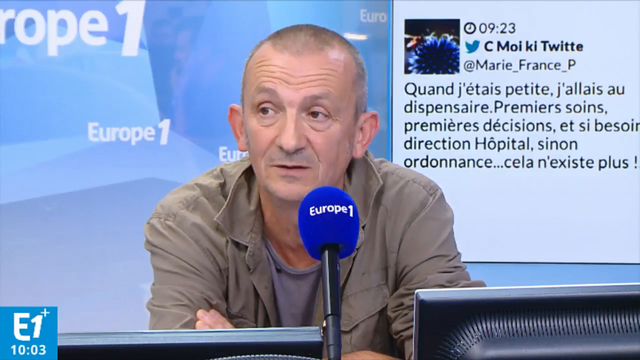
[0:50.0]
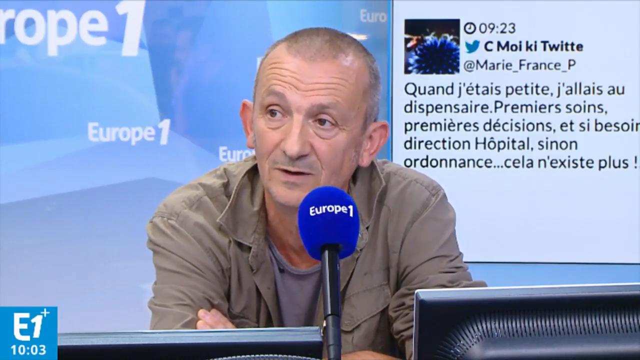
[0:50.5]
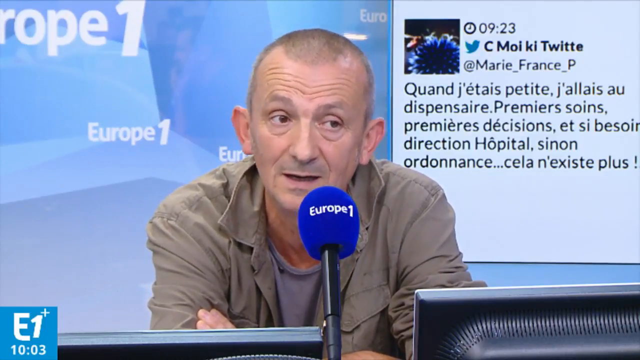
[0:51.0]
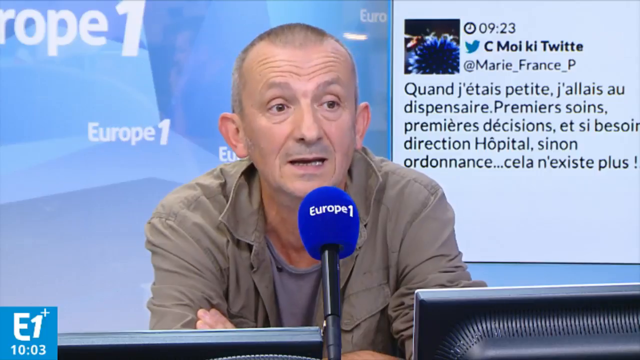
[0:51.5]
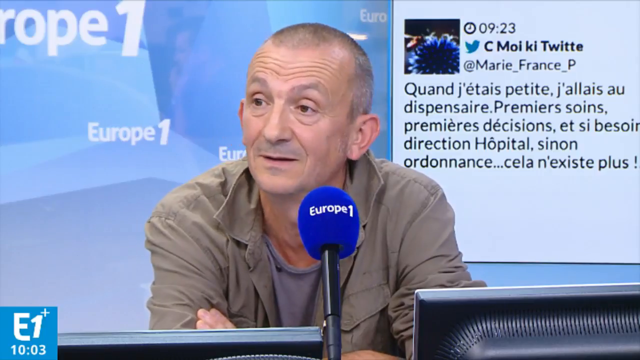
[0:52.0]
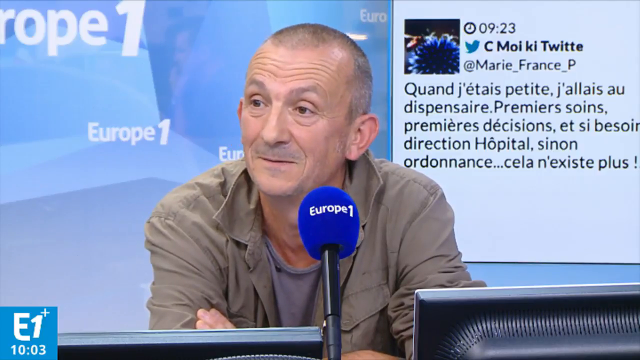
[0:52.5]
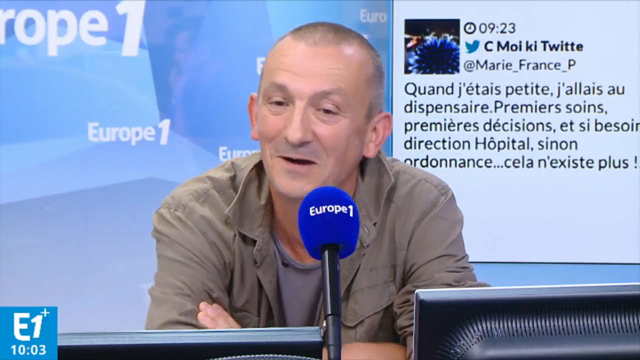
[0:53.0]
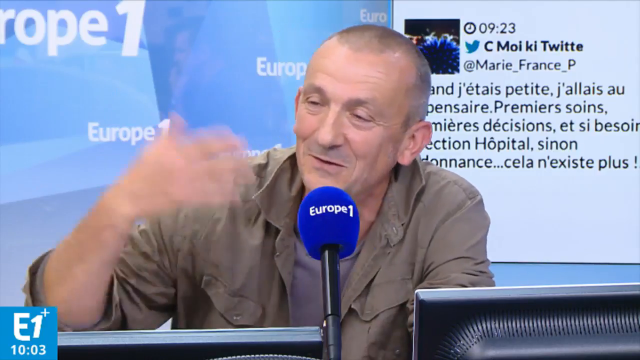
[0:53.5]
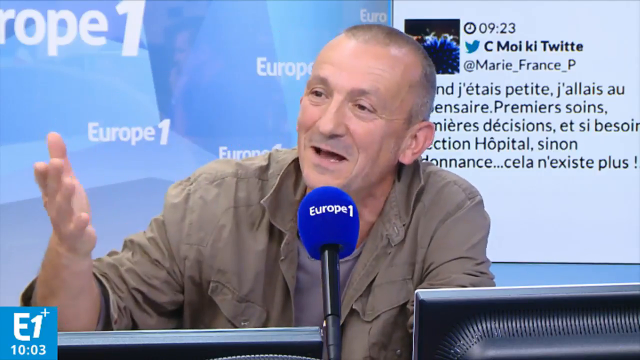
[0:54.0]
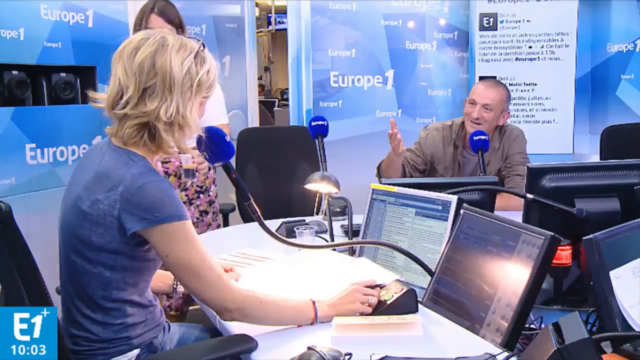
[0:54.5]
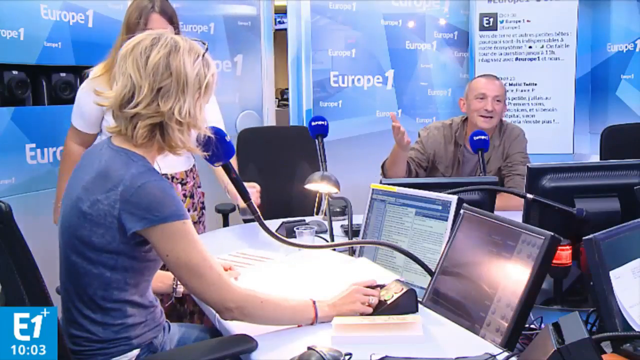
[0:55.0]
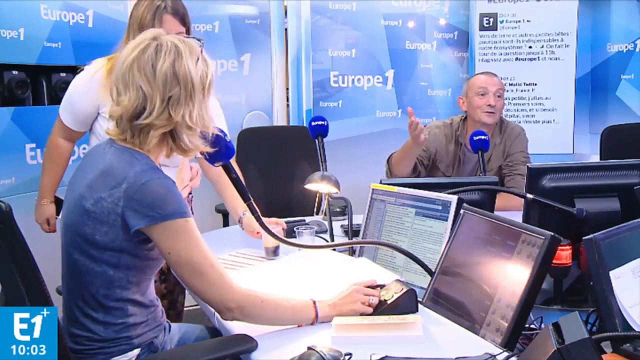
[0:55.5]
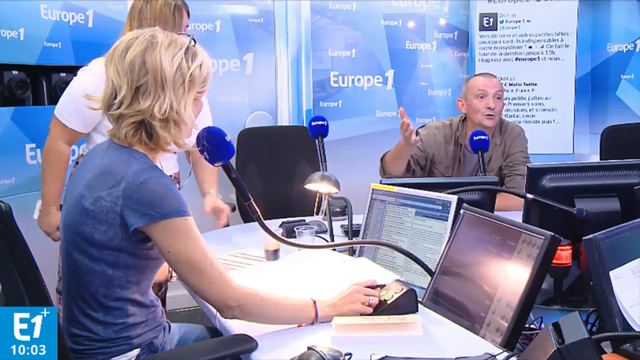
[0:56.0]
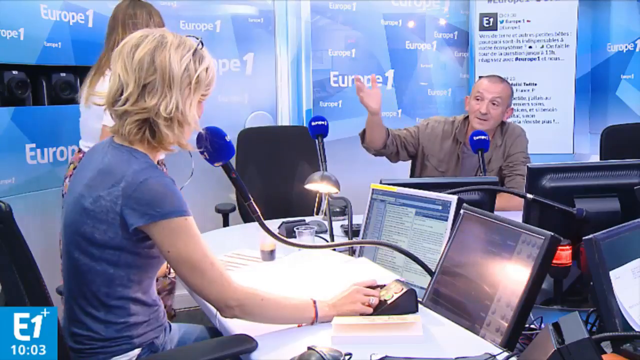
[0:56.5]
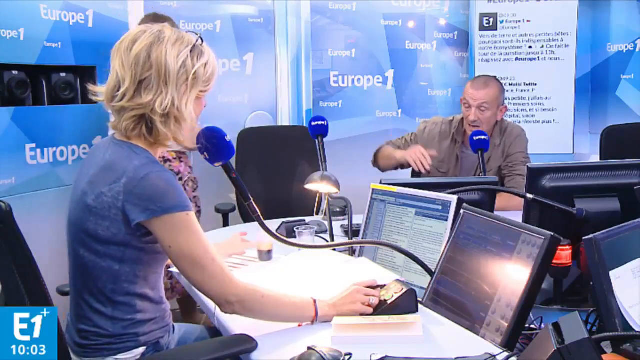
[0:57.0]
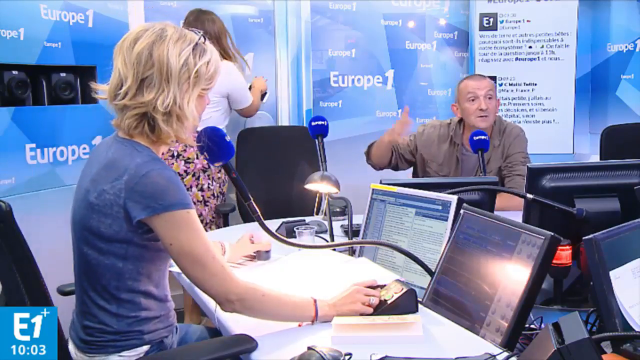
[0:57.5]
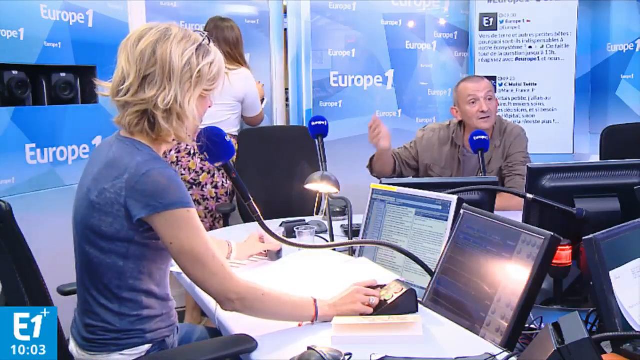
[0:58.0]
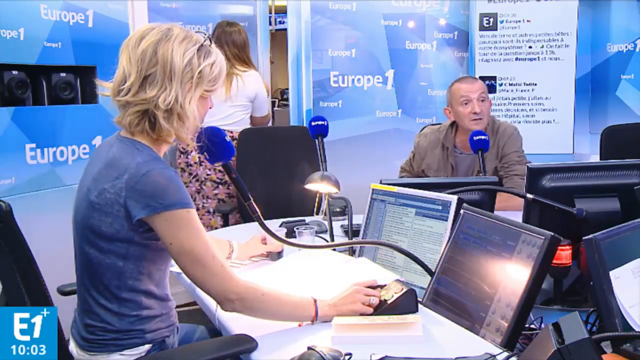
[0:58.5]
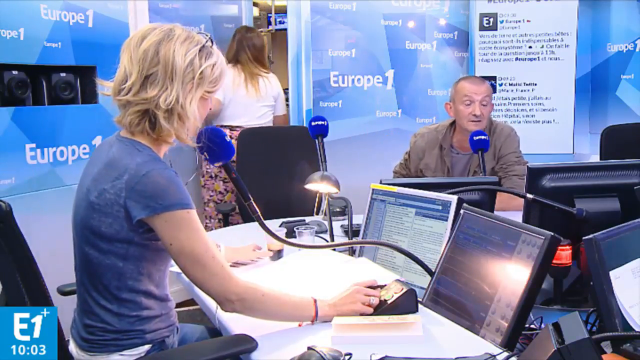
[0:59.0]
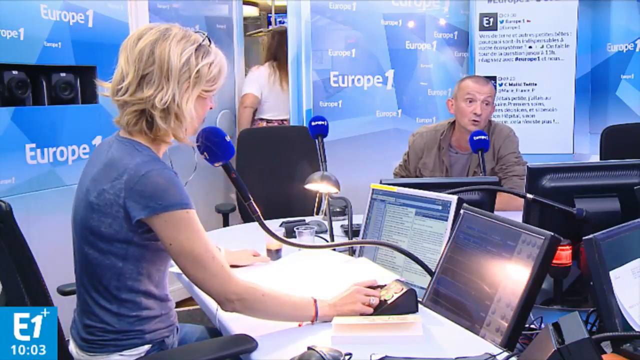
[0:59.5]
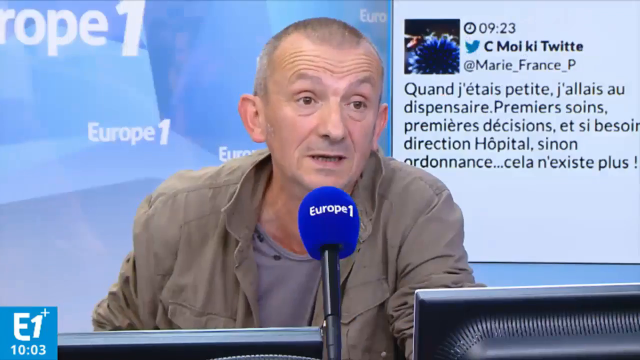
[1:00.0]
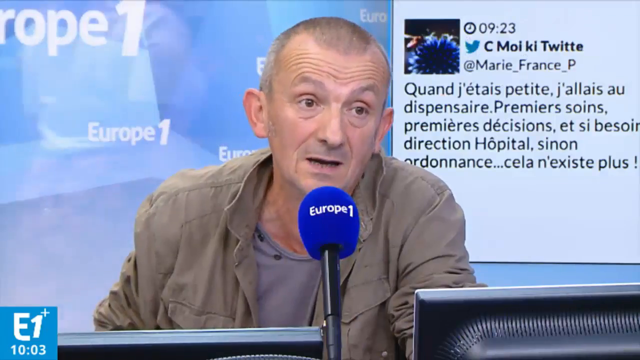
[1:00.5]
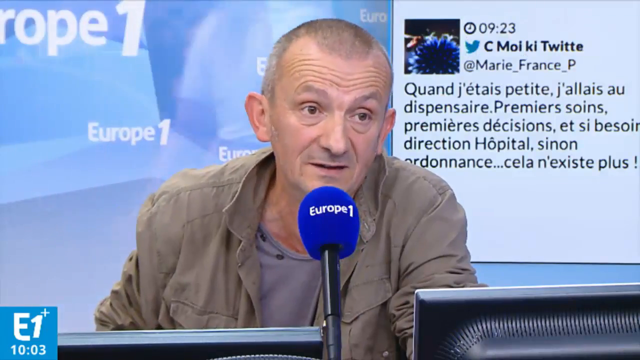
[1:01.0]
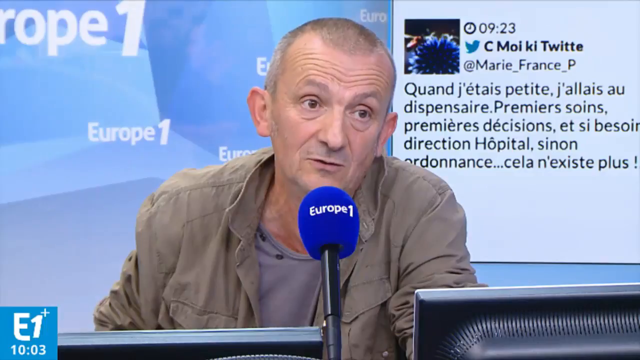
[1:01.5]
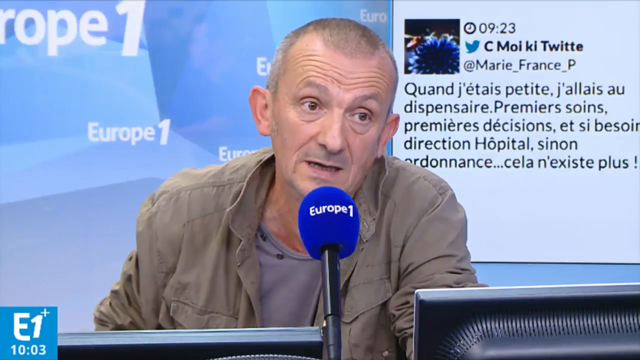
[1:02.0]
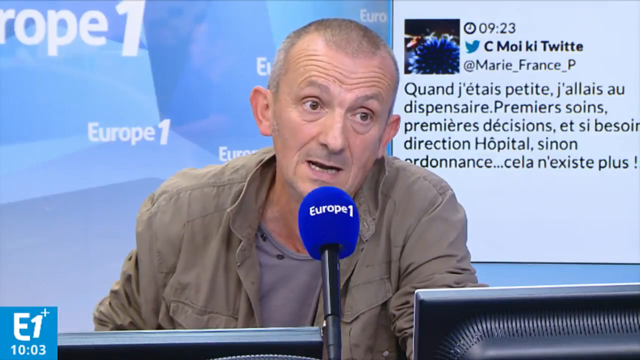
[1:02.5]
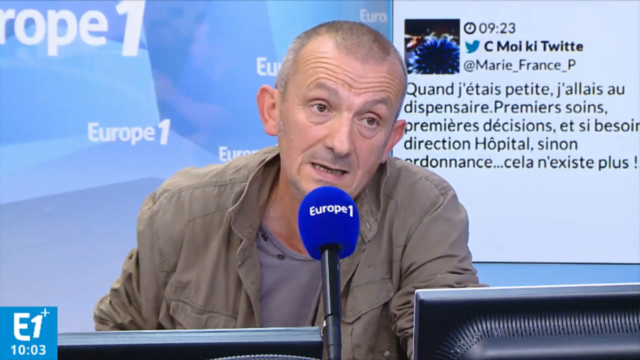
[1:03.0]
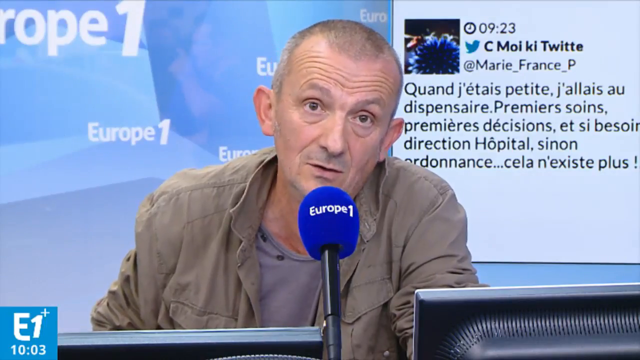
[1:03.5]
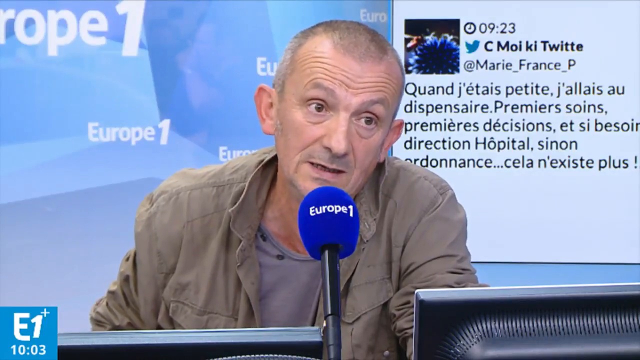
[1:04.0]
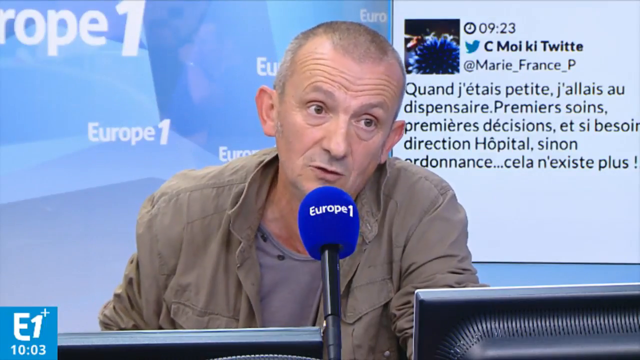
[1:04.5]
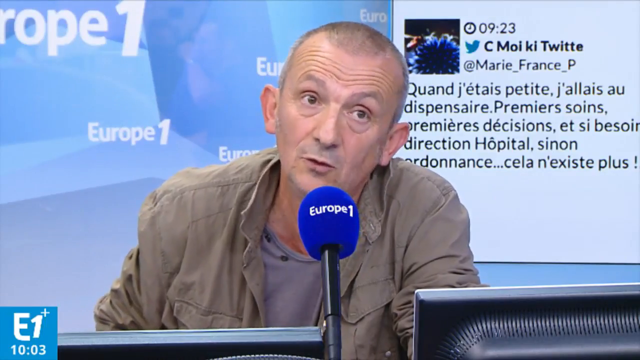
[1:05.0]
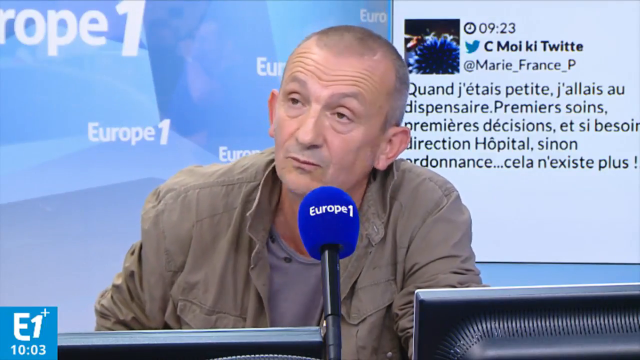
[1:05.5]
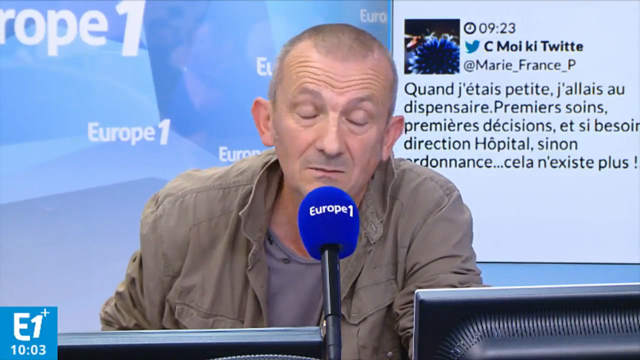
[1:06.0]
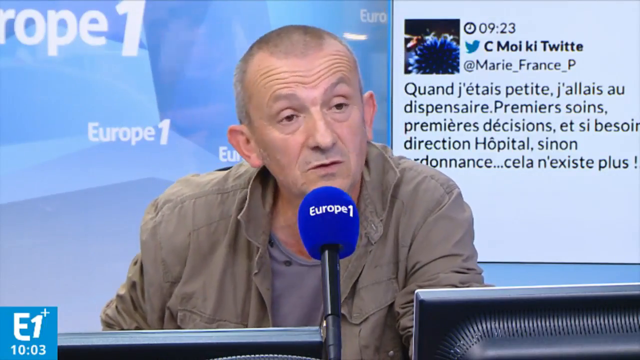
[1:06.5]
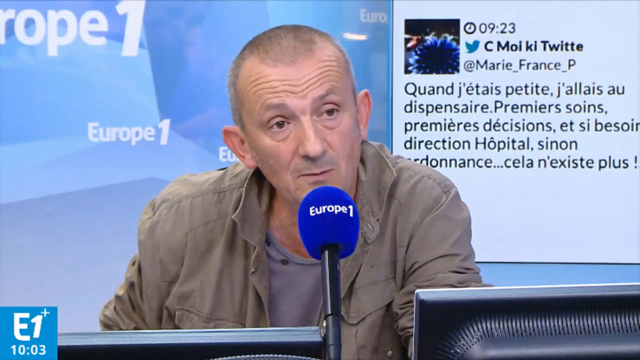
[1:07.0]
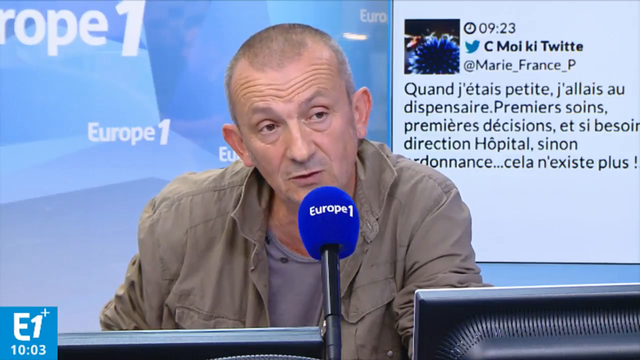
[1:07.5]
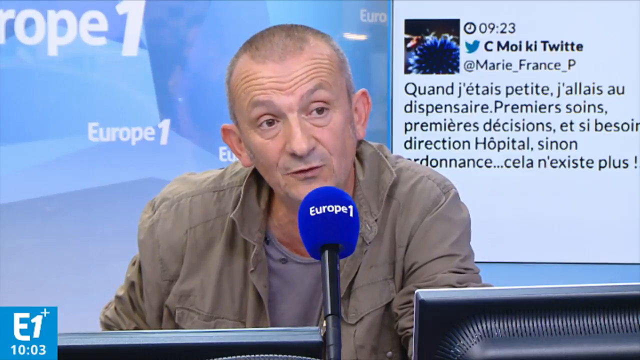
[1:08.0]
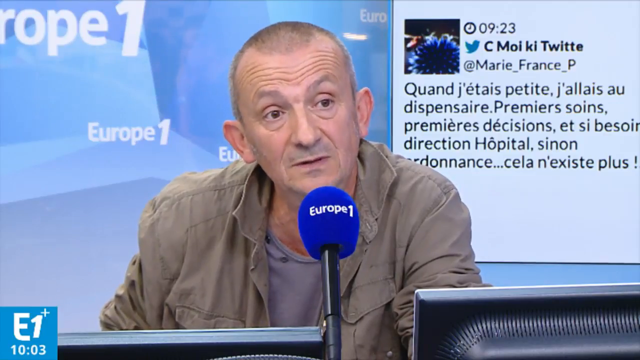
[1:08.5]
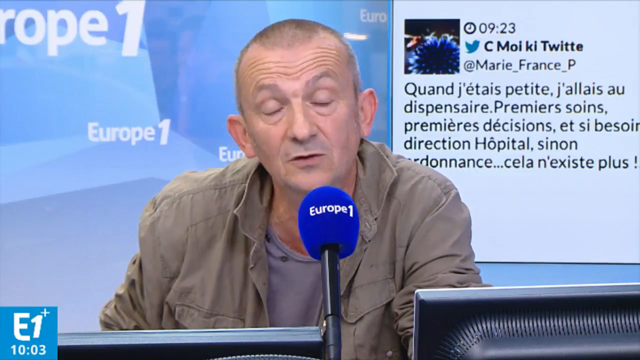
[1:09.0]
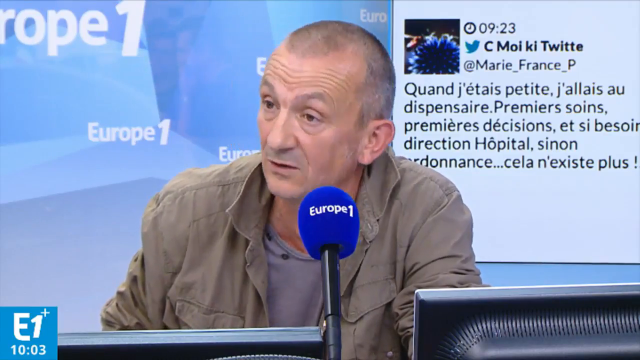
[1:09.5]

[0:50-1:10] Two women are with the old man. One walks up and down; she wears a floral skirt and a white top. The other, who has blonde hair and wears a top, is seated behind a table with computers in front of her and seems to be reading or typing something. The old man says something to her, and he makes gestures; they seem to be interviewing him. The woman in the floral skirt brings something to the seated woman, comes and leaves, and enters holding a cup half full of some unidentified liquid, then comes back with another cup containing liquid, so there are two cups on the table. The scene looks possibly like a talk show.